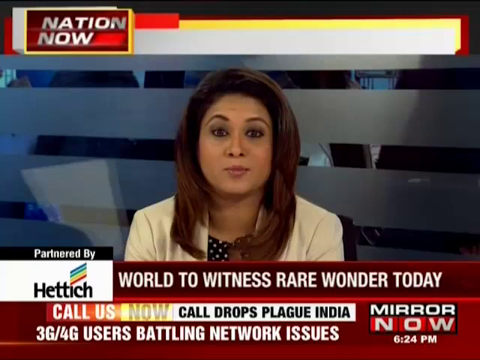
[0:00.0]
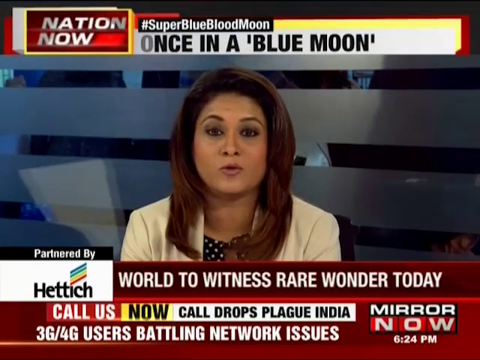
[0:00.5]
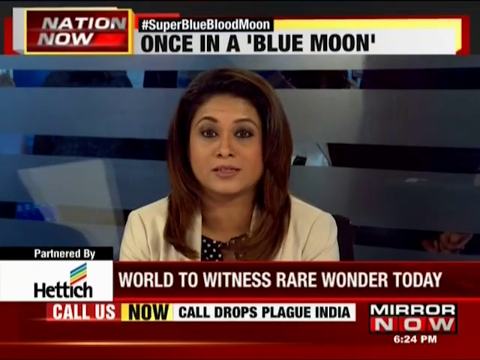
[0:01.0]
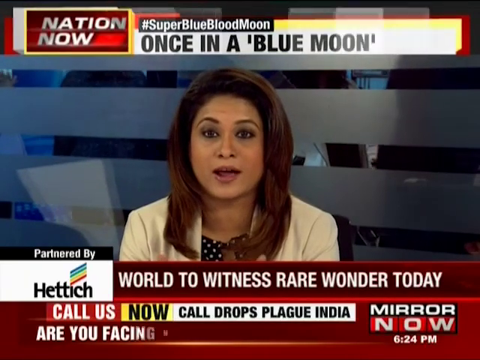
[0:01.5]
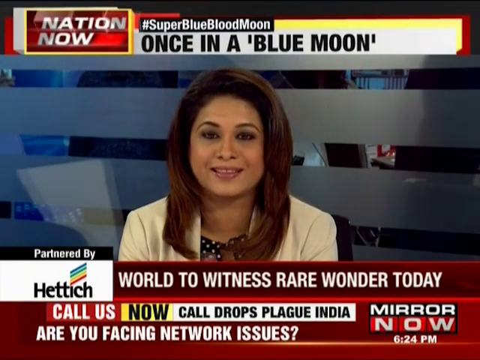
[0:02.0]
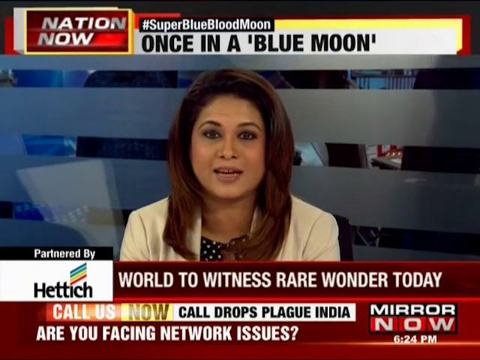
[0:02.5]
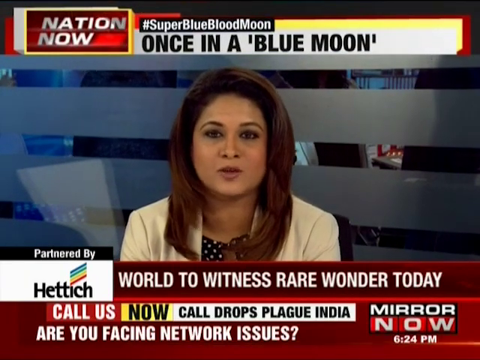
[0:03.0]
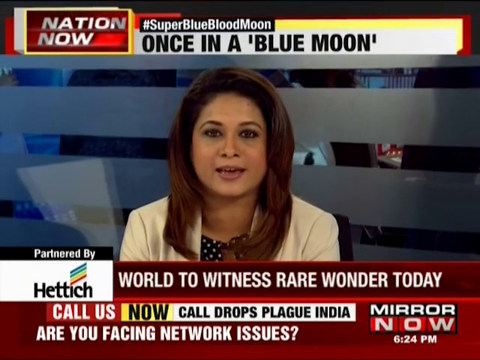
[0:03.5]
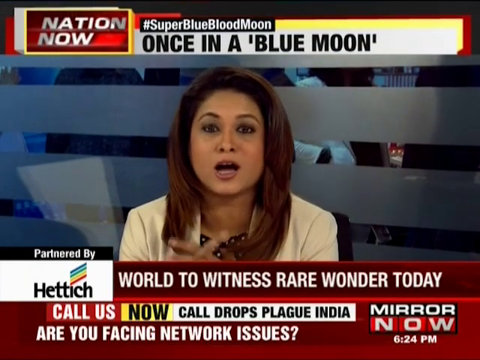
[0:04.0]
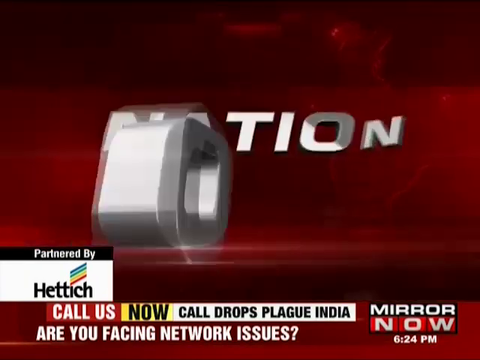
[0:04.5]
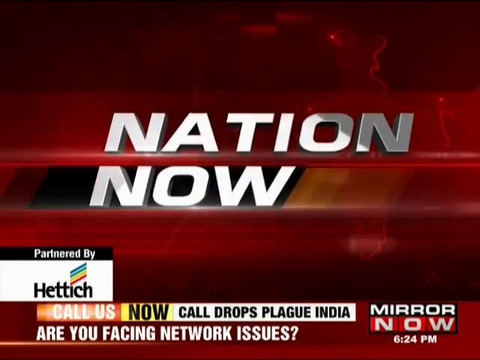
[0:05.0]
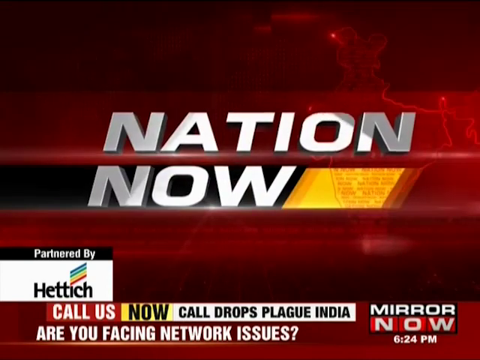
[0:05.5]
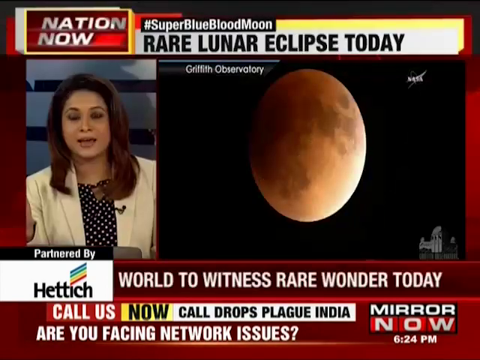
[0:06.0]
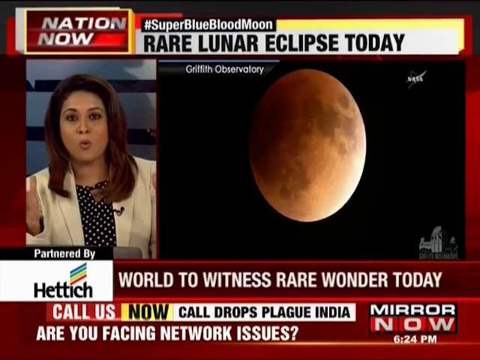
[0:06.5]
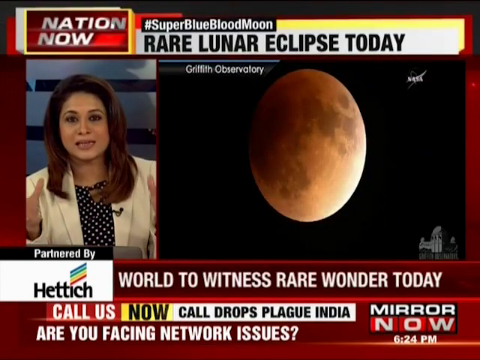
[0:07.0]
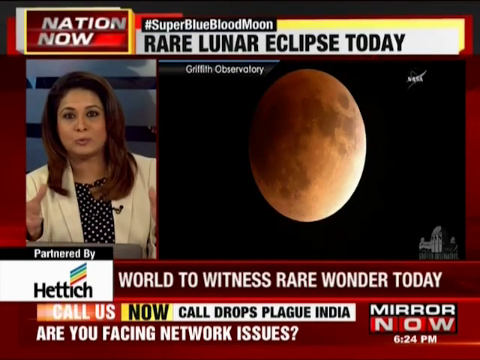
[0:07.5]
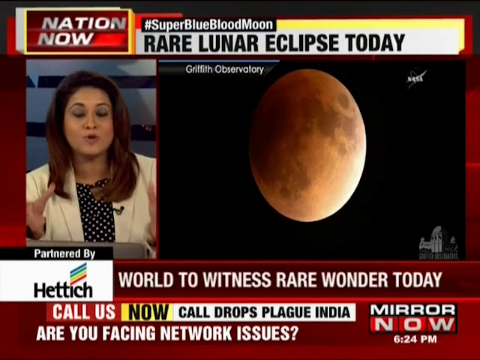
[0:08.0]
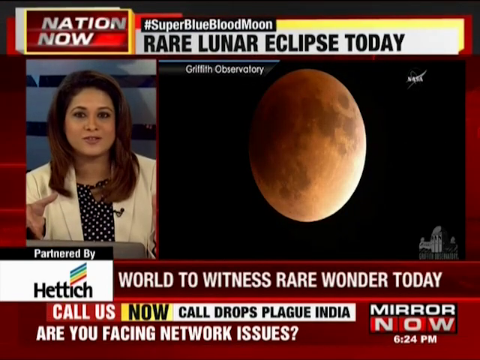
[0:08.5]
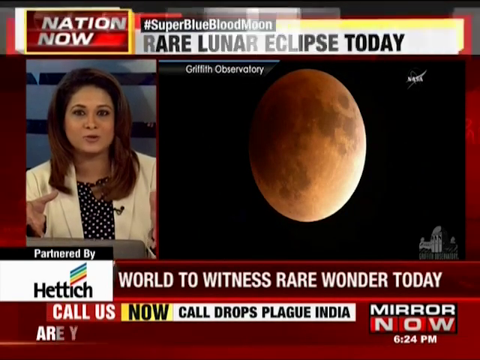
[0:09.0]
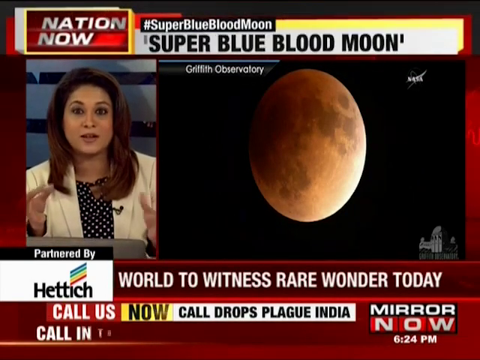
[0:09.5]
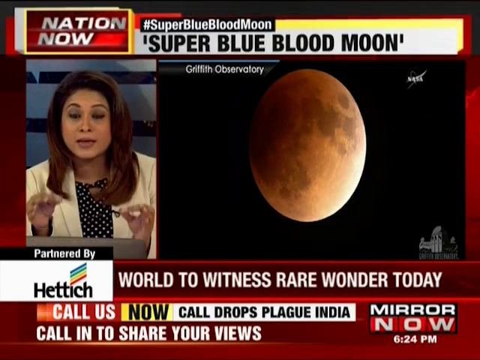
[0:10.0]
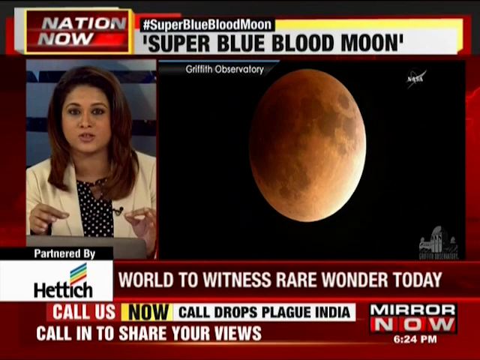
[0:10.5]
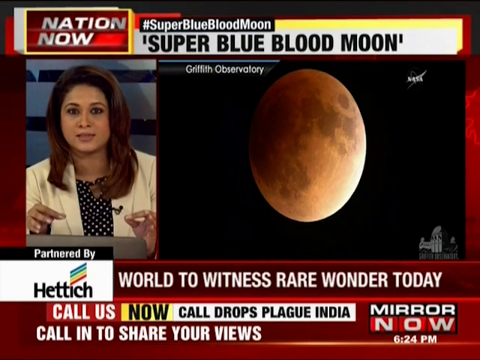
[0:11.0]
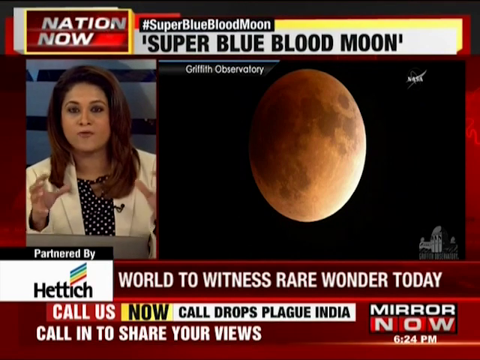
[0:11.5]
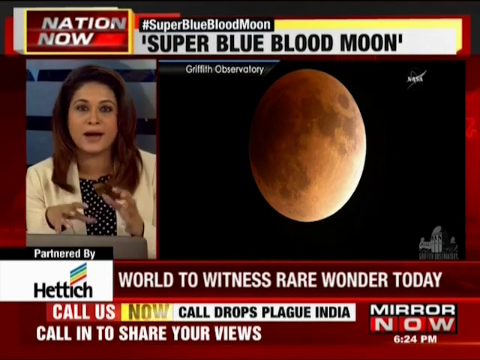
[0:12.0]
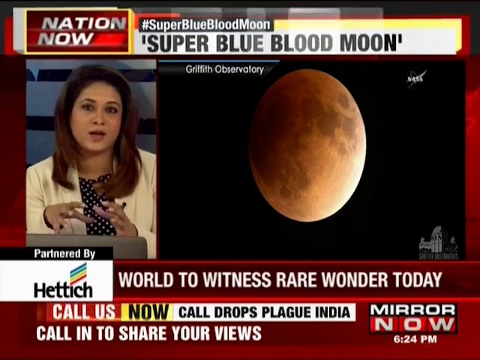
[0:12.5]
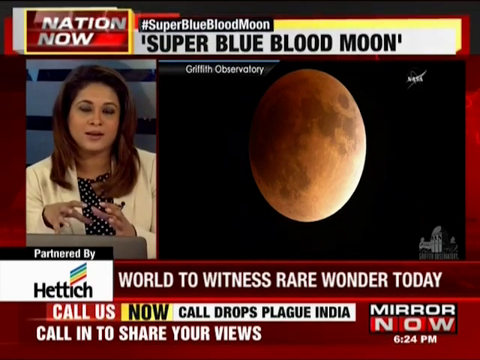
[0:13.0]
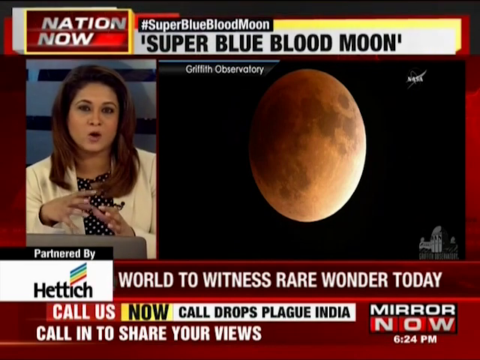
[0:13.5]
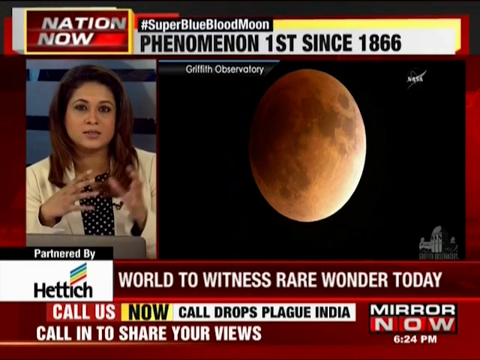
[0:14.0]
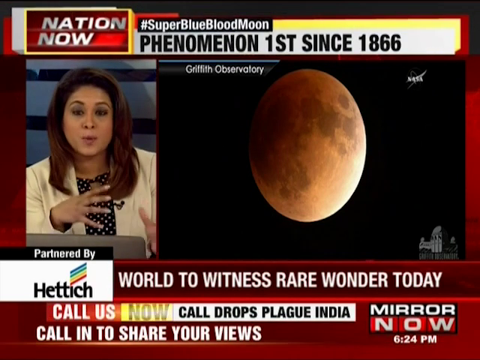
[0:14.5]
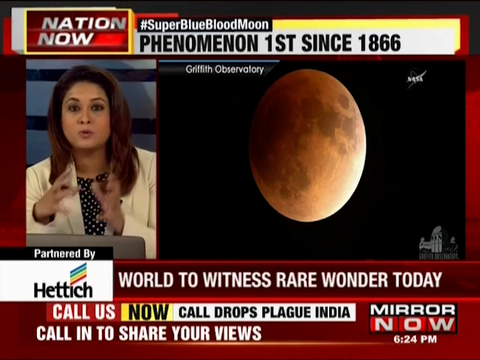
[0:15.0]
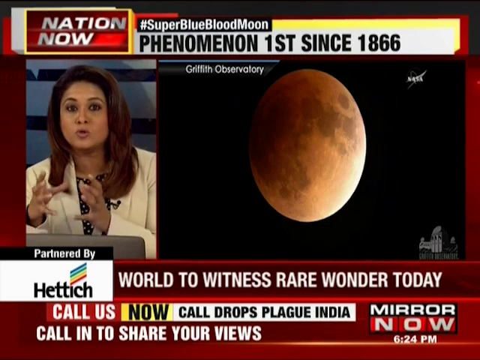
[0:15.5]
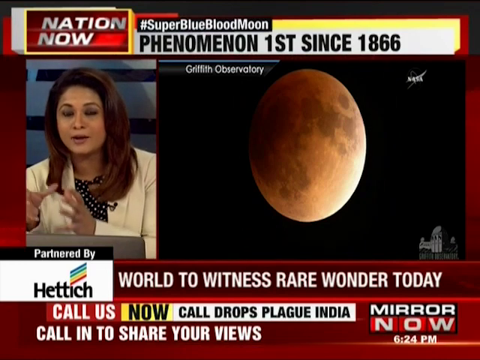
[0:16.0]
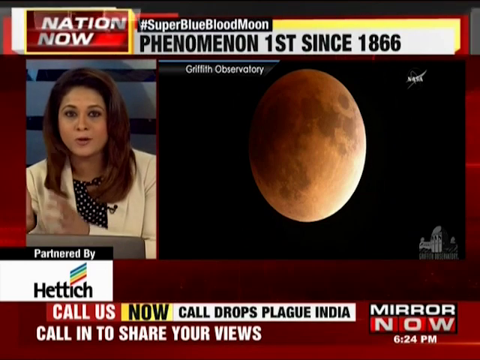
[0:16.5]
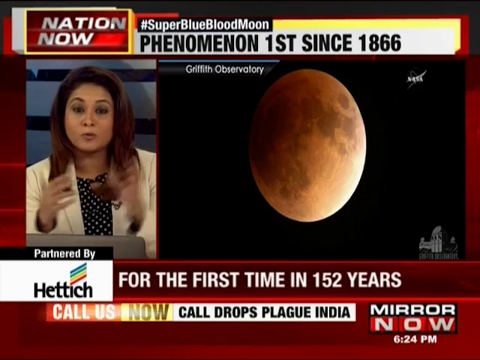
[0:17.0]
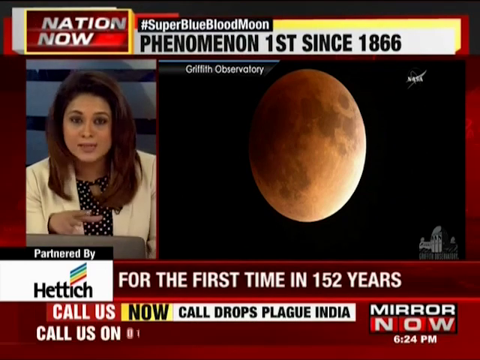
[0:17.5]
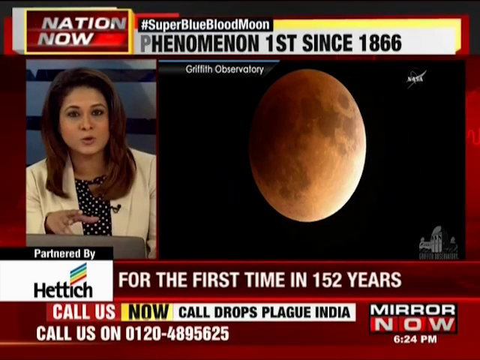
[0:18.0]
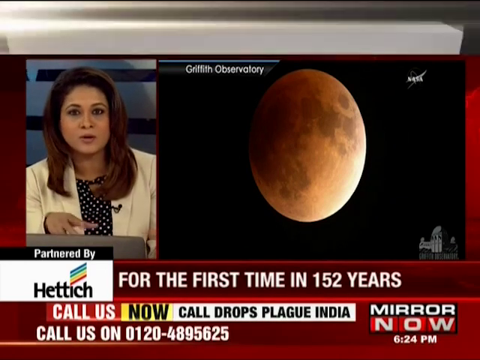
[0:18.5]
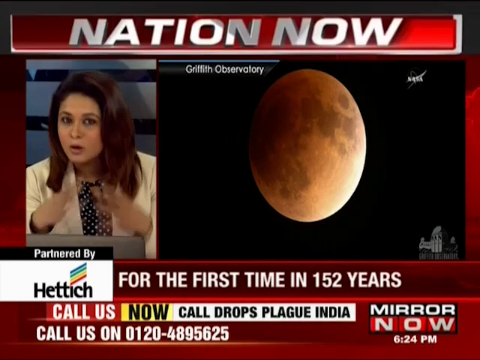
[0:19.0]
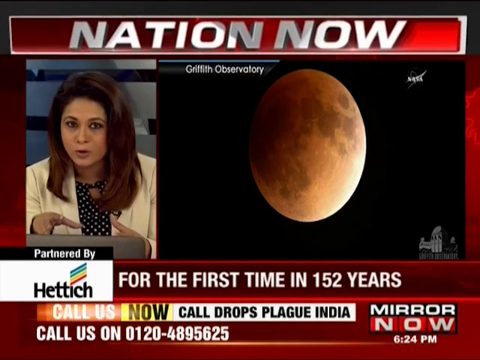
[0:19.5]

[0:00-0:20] A news presentation, apparently from Mirror Now, covers a lunar eclipse today and a super blue black moon, a rare phenomenon first seen in 1866.